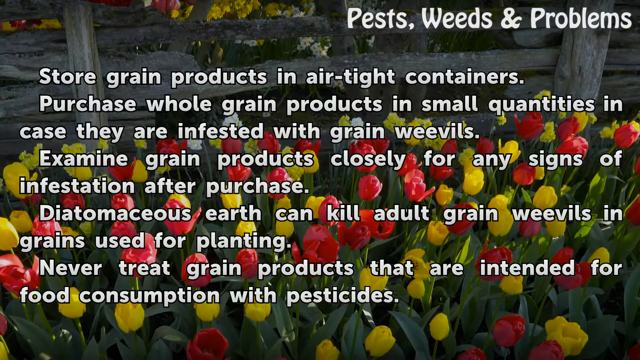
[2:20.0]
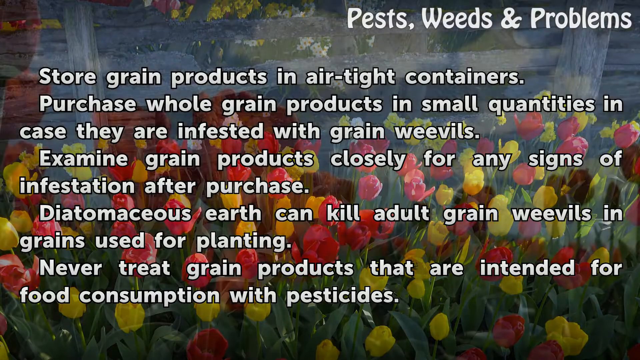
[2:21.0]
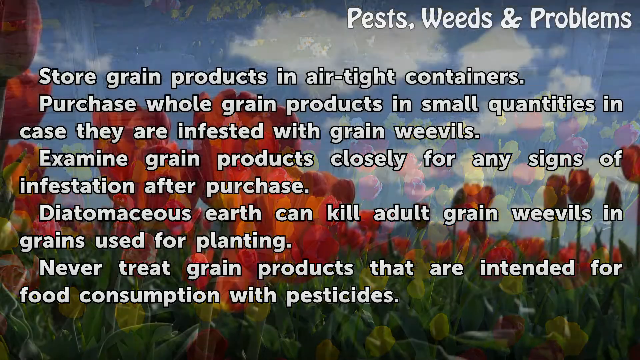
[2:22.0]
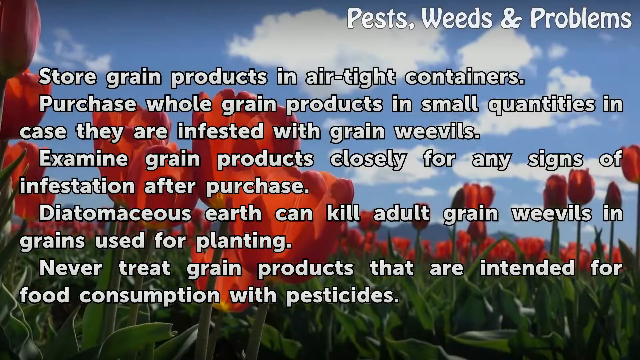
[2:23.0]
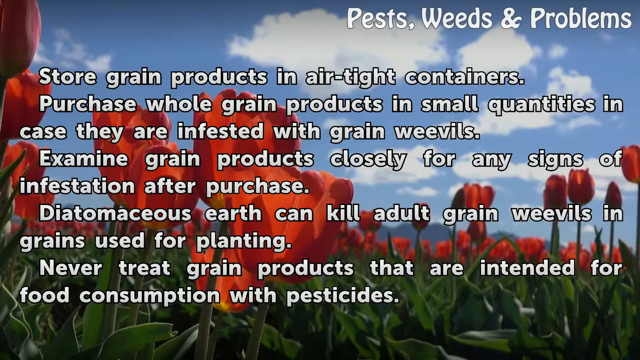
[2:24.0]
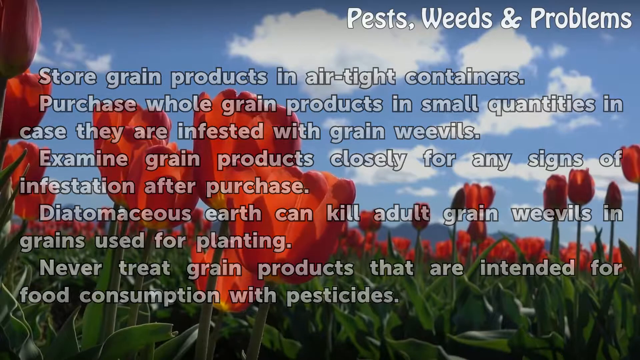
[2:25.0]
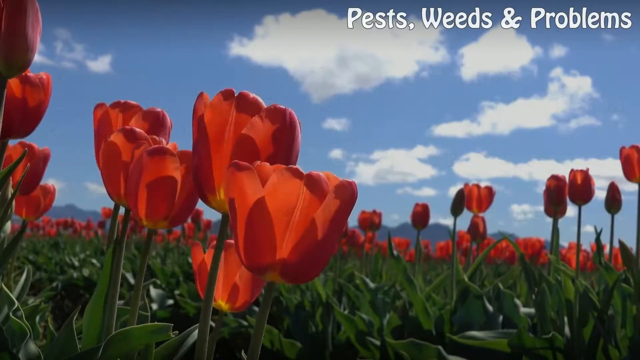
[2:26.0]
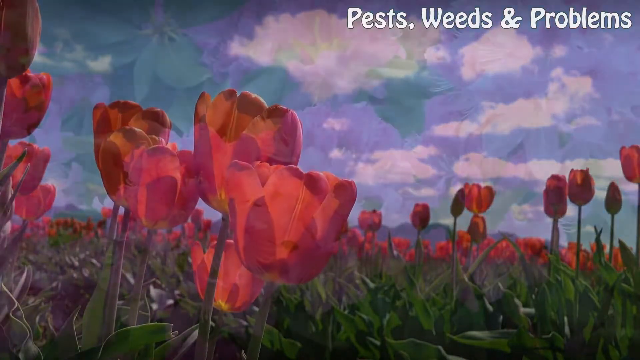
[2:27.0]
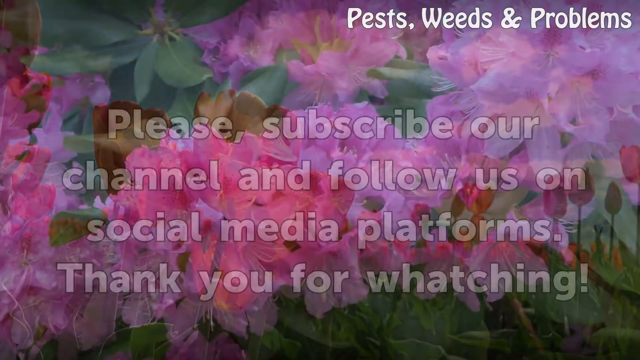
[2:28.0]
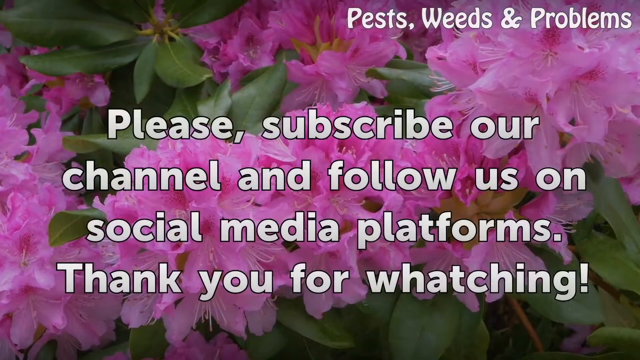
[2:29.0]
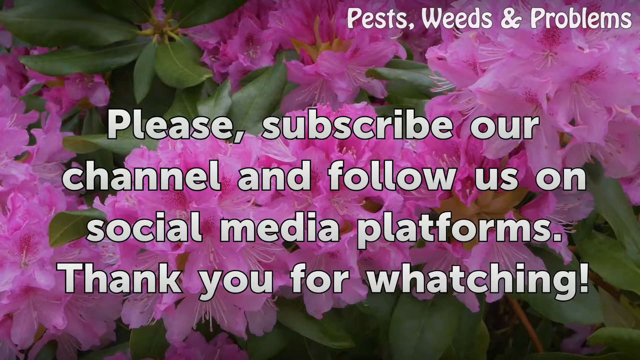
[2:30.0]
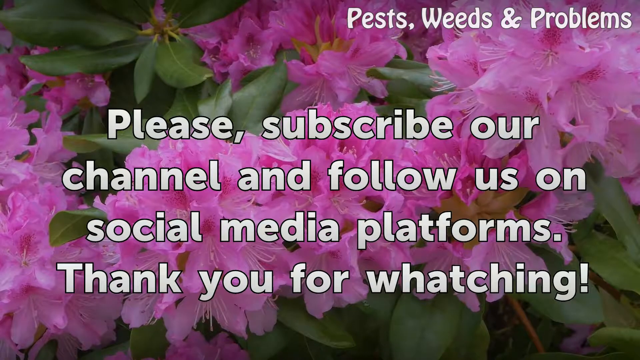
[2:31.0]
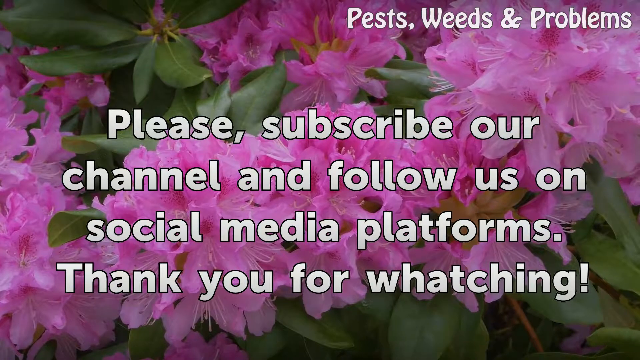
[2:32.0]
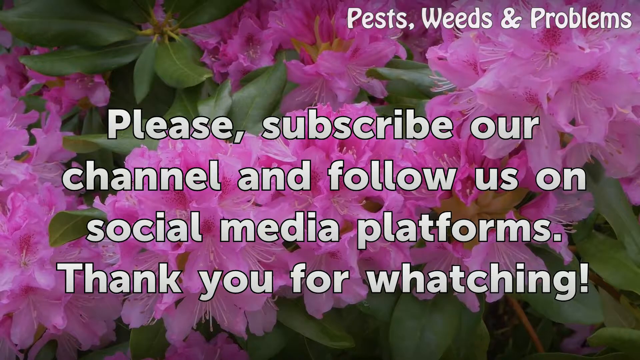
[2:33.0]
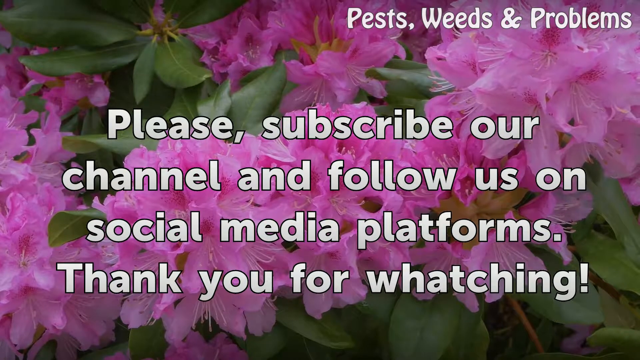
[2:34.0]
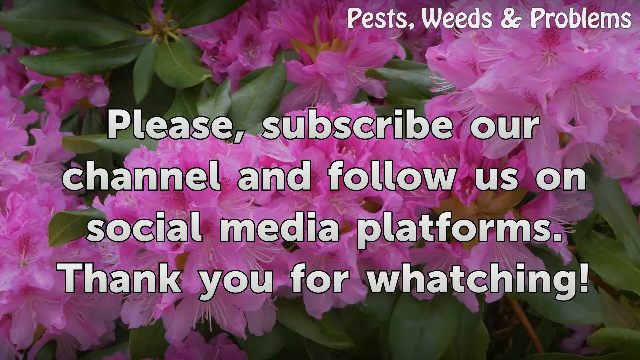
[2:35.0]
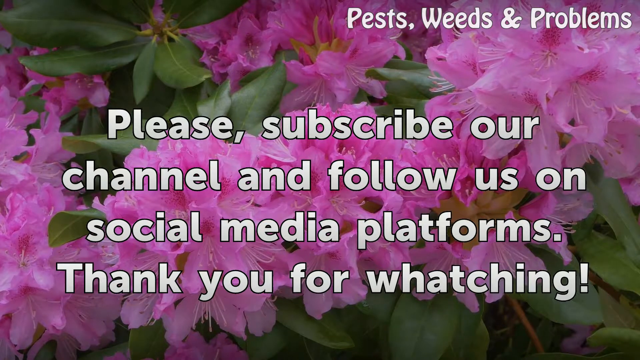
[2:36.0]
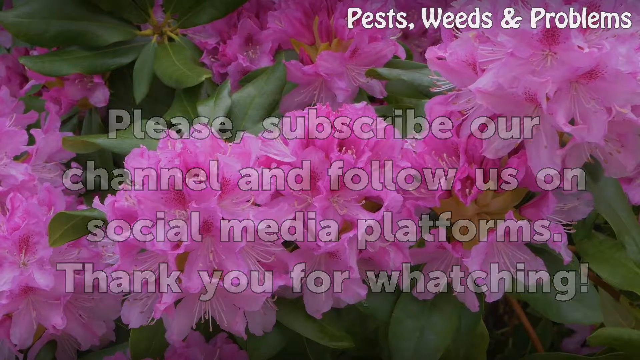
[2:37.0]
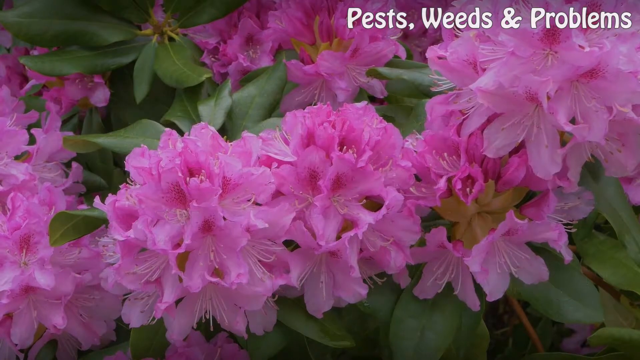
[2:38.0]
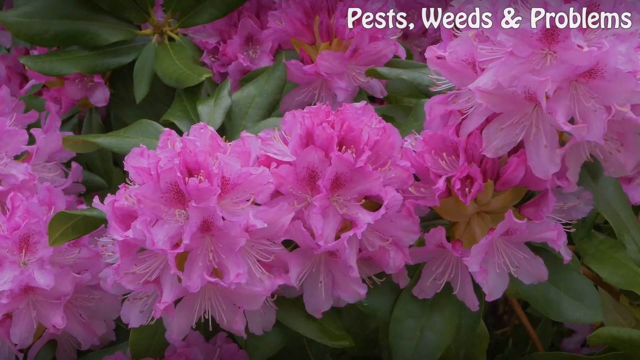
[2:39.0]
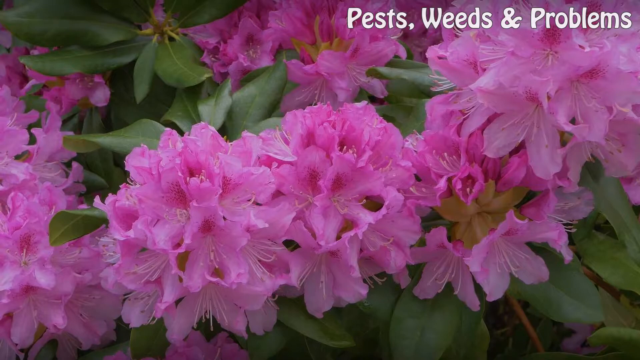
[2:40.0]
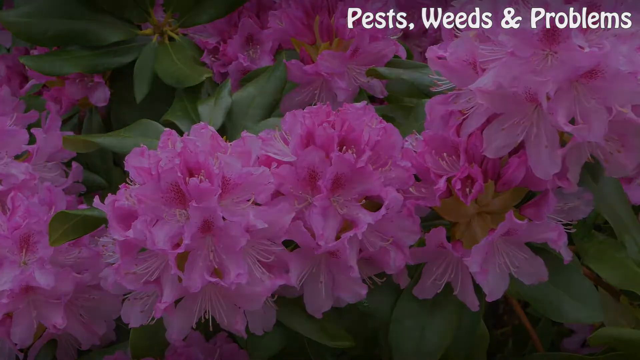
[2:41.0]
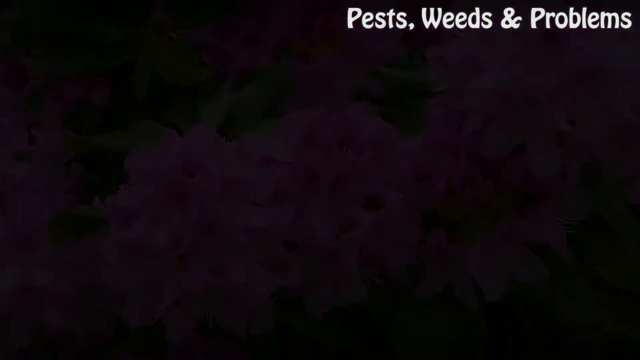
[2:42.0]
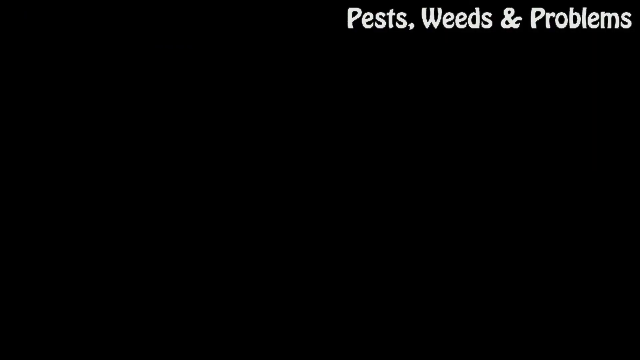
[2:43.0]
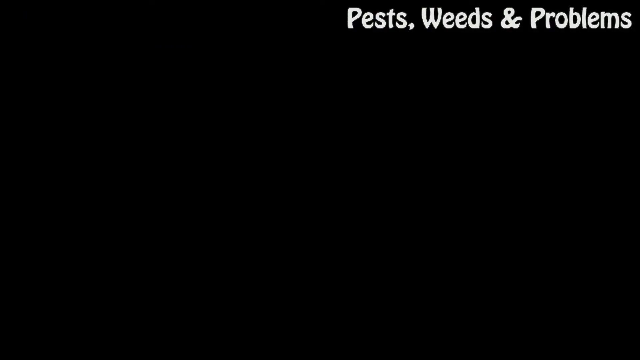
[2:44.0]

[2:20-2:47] The message on the screen reads "store grain products in airtight containers. Purchase whole grain products in small quantities. Examine grain products closely for any signs of infestation." It also states that diatomaceous earth can be used against adult grain weevils, but that pesticide should never be used on grain used for food consumption. The background changes to large flowers swaying in the breeze, then to a close-up of clusters of pink flowers that look like rhododendrons. The message changes to "please subscribe our channel and follow us on social media platforms. Thank you for watching." The rhododendrons move slowly back and forth and their leaves shiver in the wind, and this remains on screen for the last few seconds of the video.